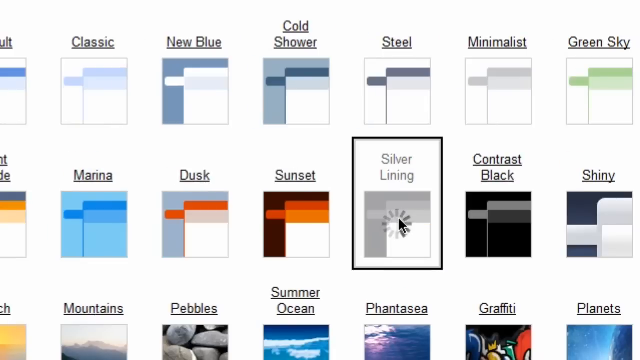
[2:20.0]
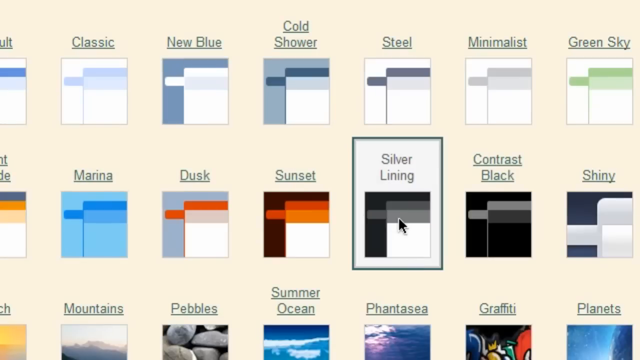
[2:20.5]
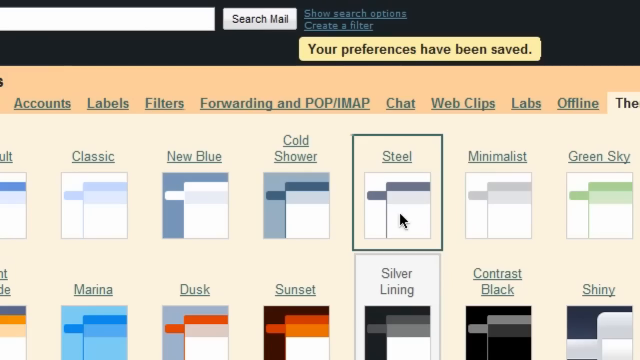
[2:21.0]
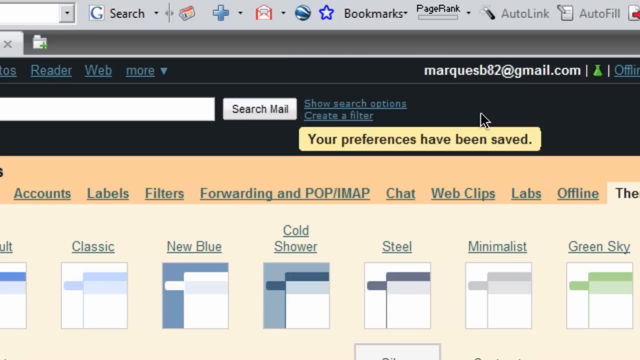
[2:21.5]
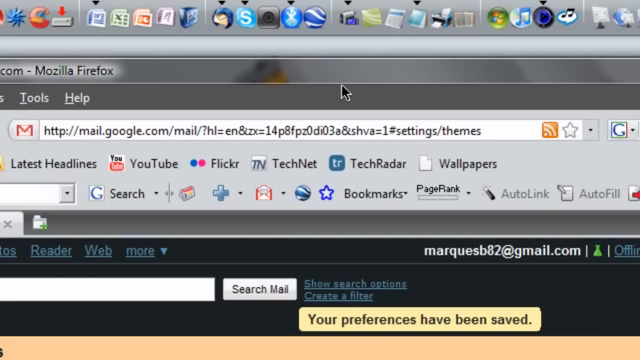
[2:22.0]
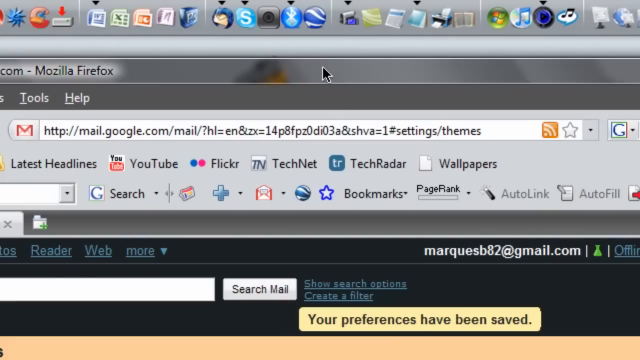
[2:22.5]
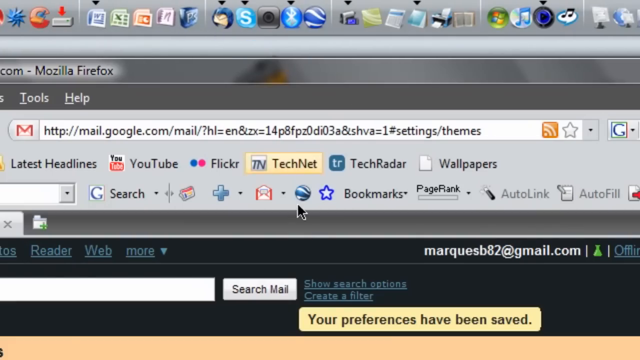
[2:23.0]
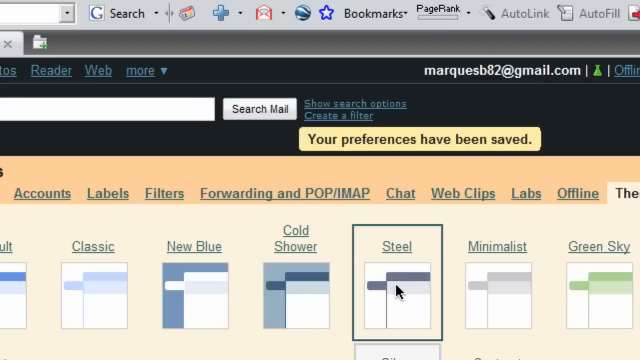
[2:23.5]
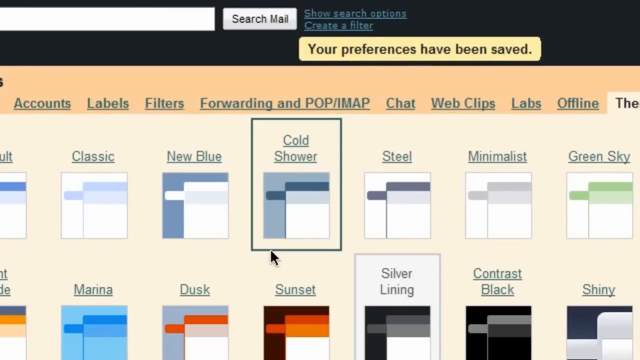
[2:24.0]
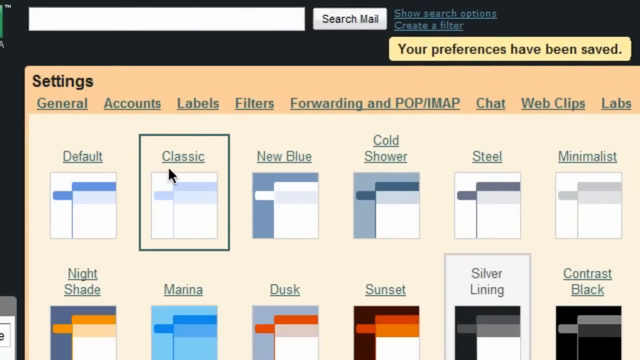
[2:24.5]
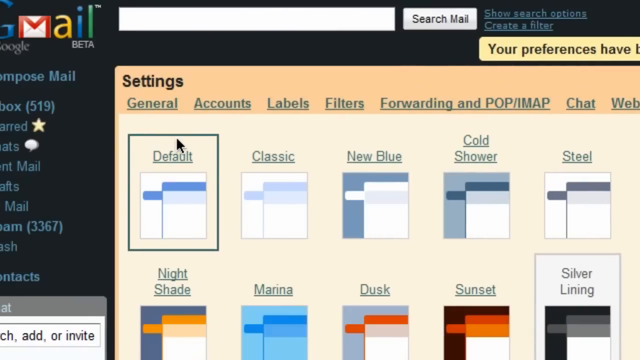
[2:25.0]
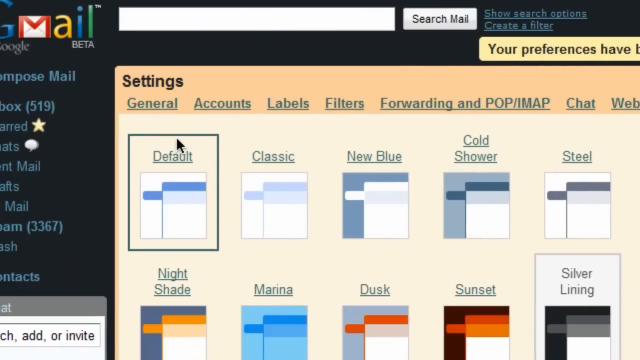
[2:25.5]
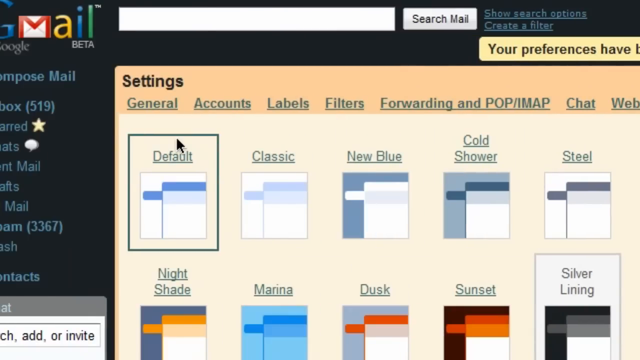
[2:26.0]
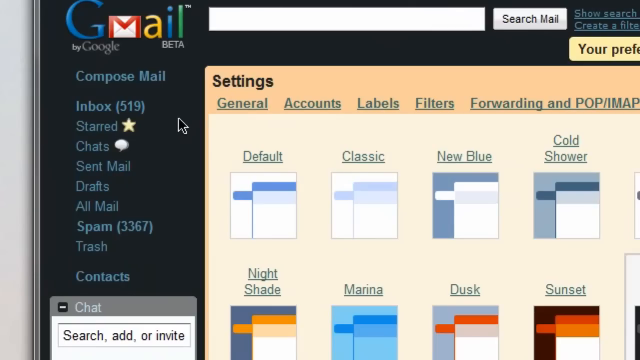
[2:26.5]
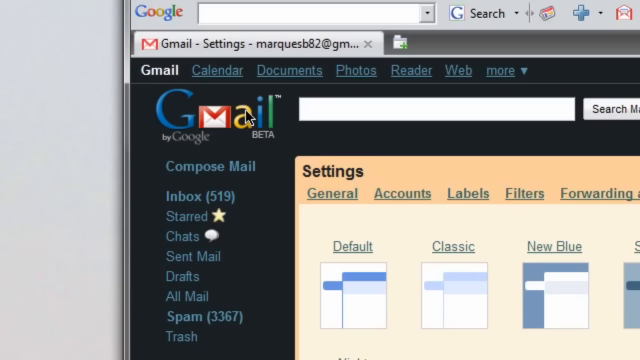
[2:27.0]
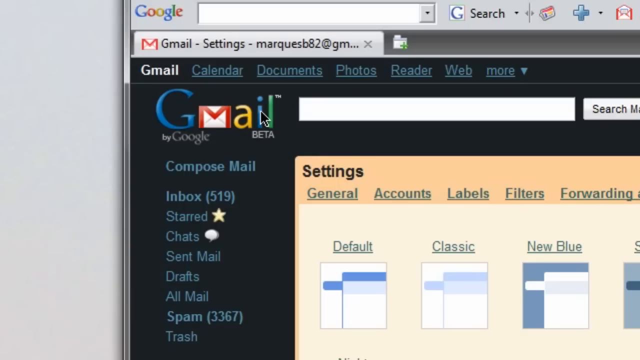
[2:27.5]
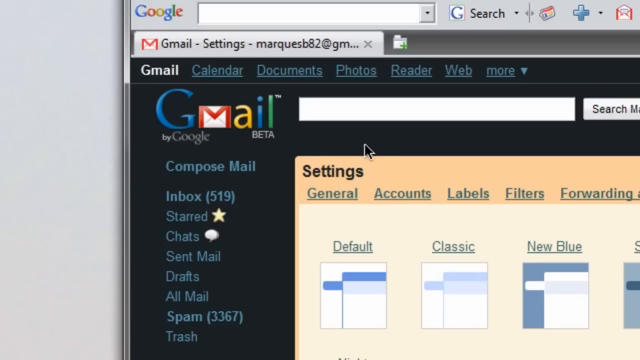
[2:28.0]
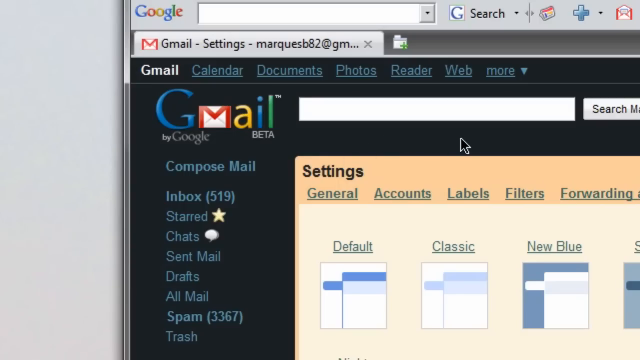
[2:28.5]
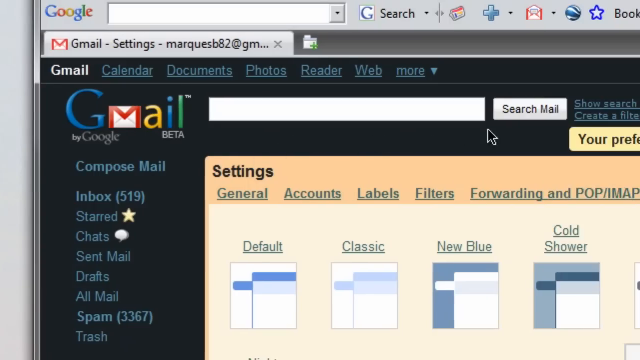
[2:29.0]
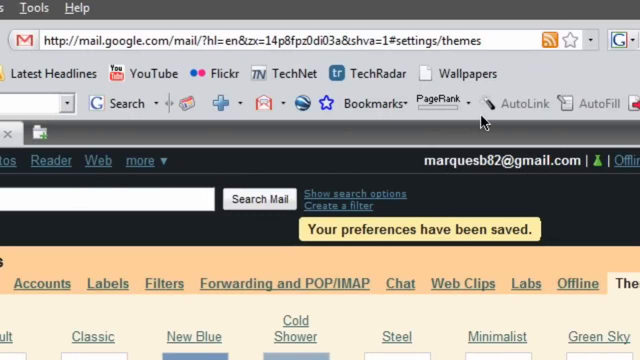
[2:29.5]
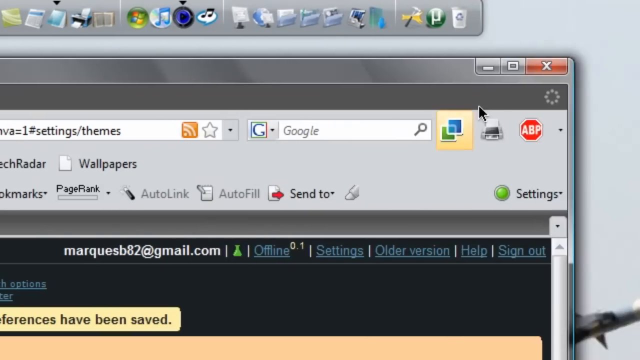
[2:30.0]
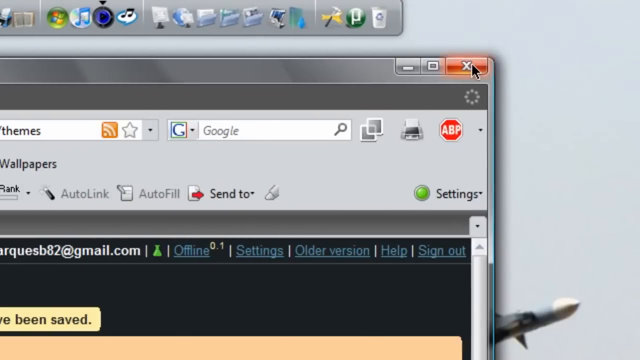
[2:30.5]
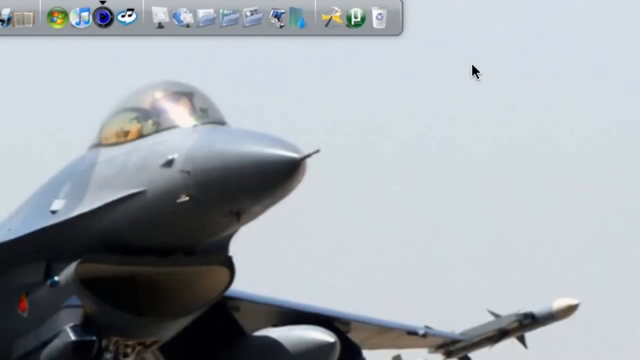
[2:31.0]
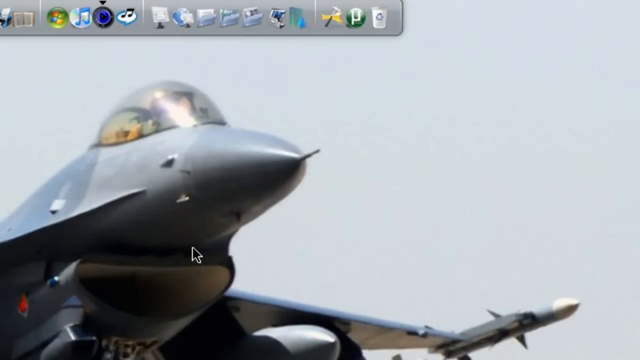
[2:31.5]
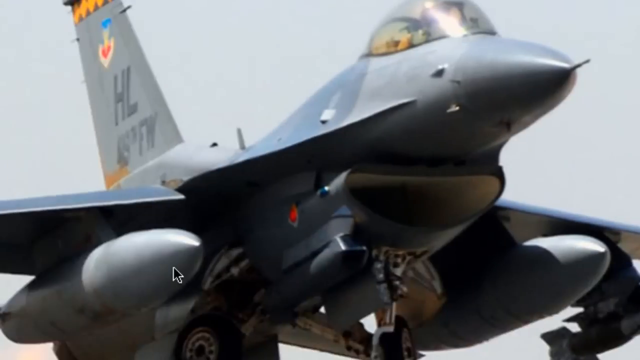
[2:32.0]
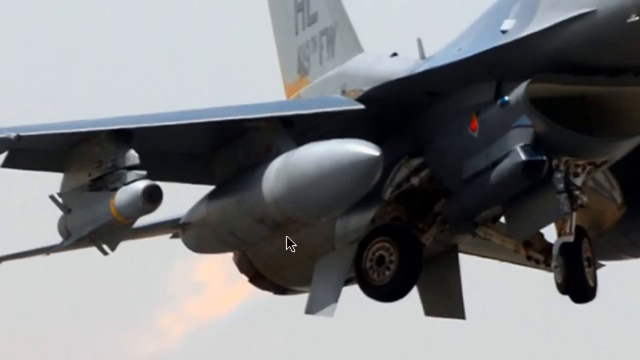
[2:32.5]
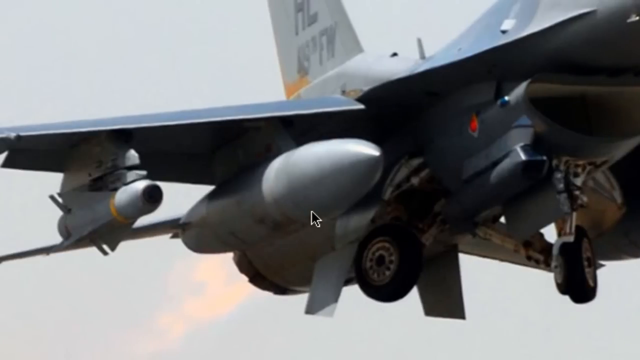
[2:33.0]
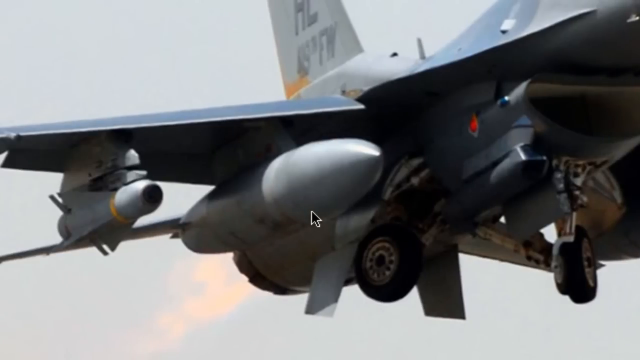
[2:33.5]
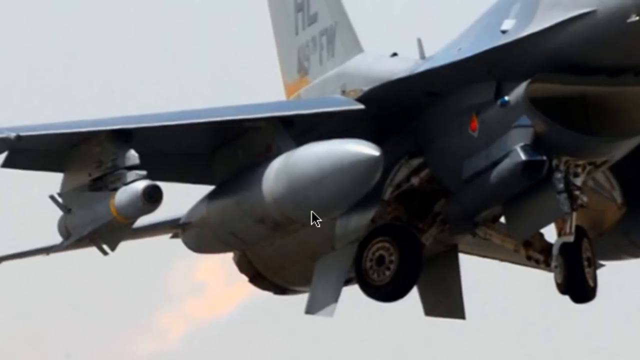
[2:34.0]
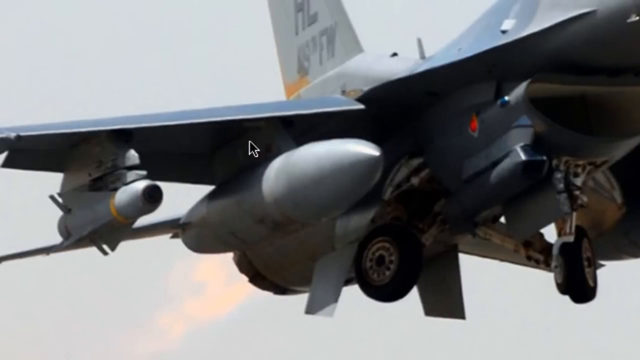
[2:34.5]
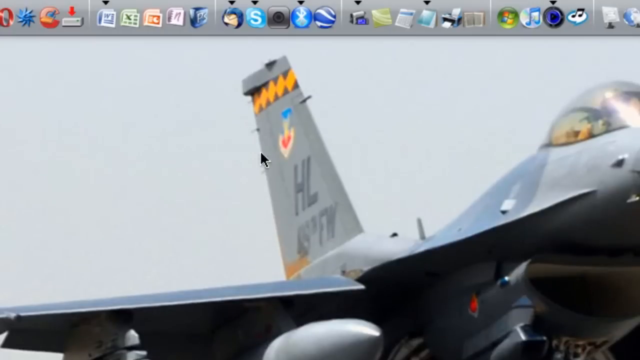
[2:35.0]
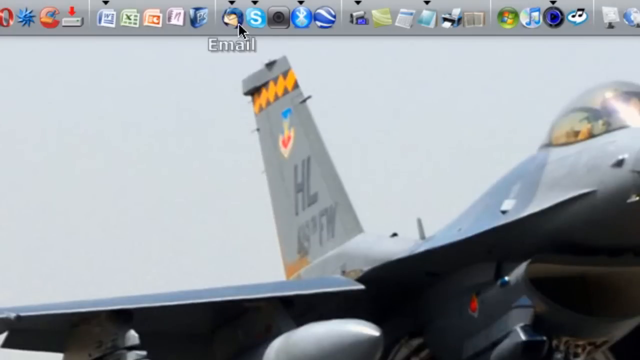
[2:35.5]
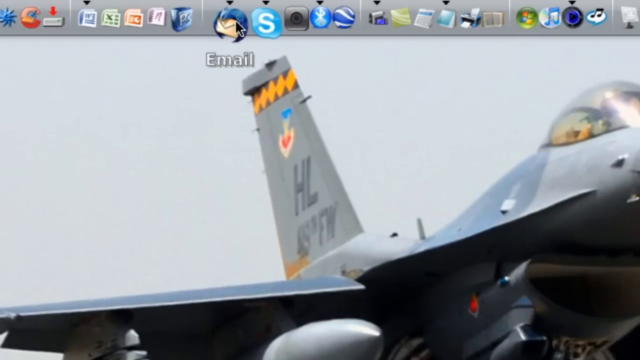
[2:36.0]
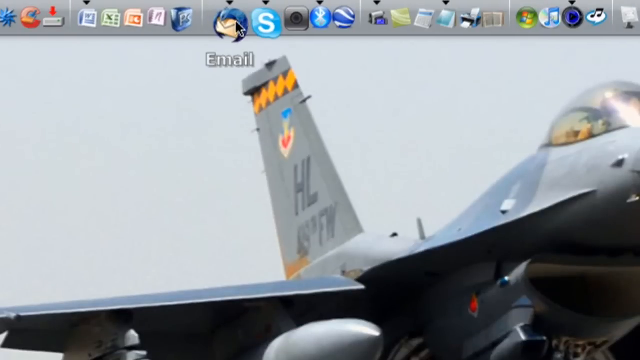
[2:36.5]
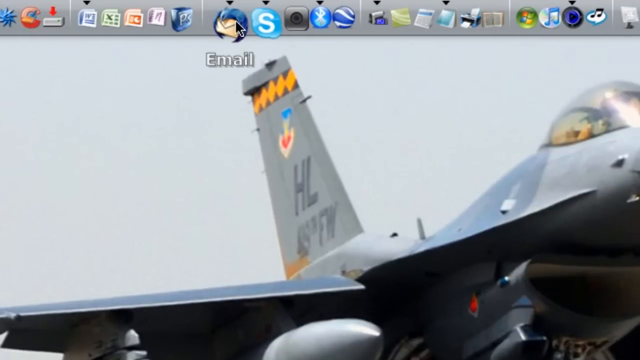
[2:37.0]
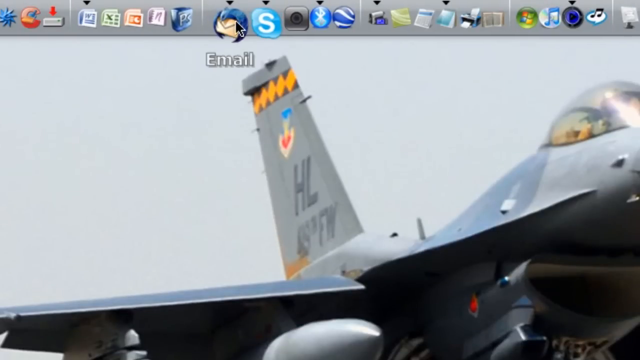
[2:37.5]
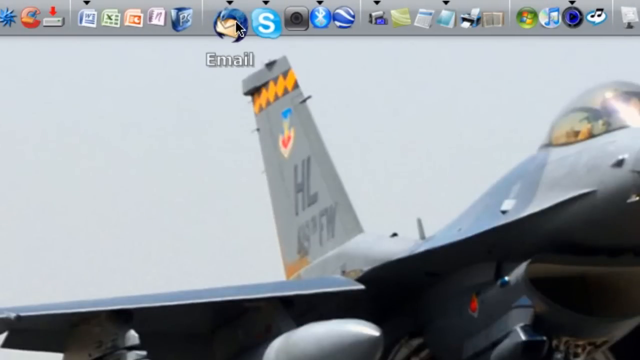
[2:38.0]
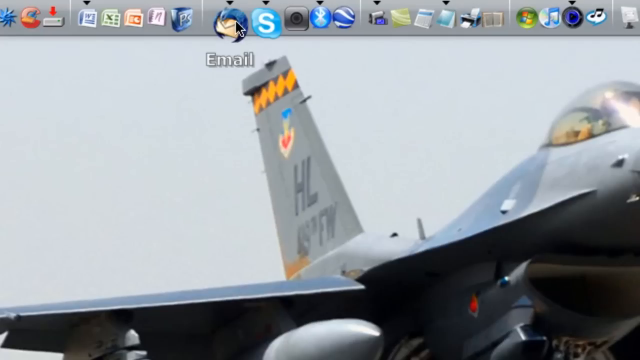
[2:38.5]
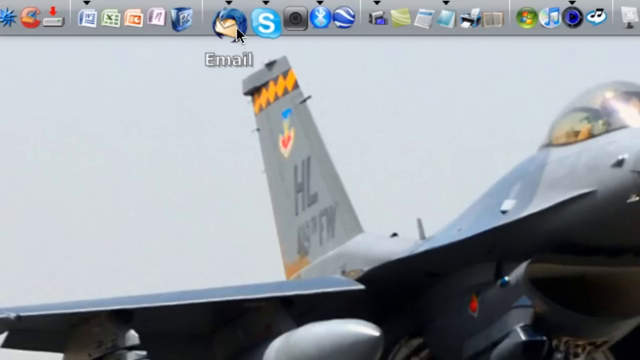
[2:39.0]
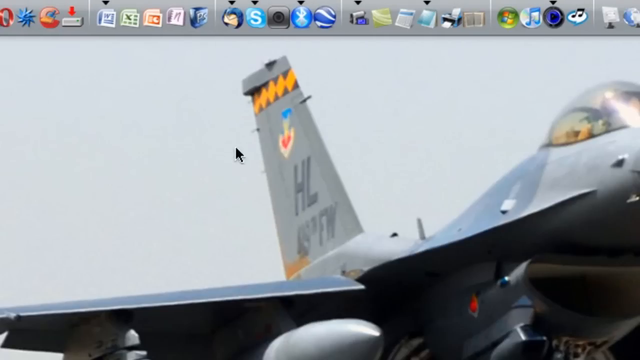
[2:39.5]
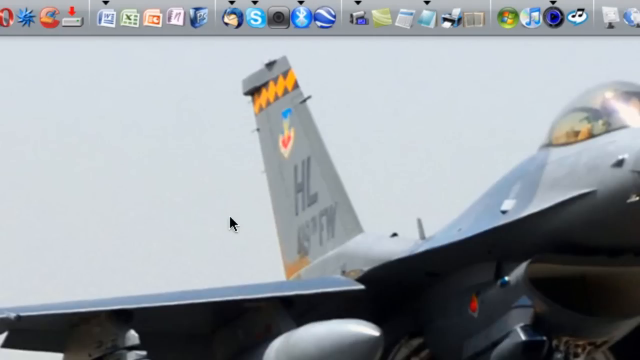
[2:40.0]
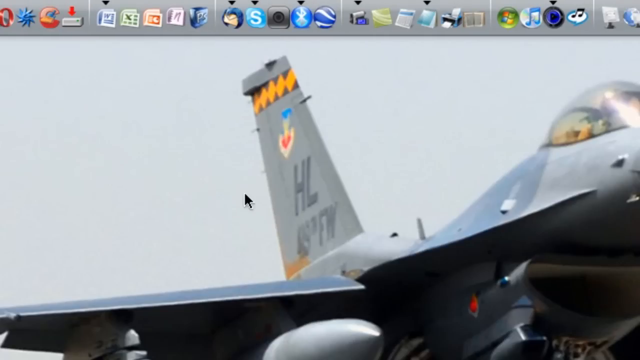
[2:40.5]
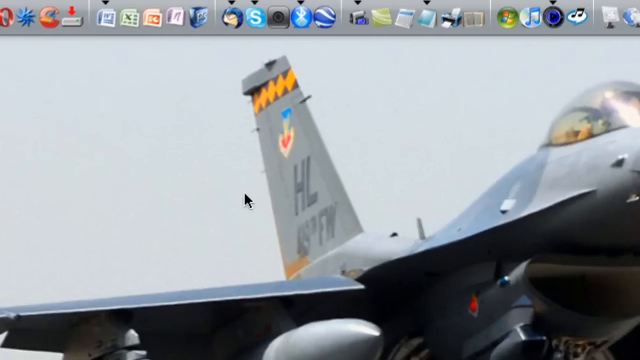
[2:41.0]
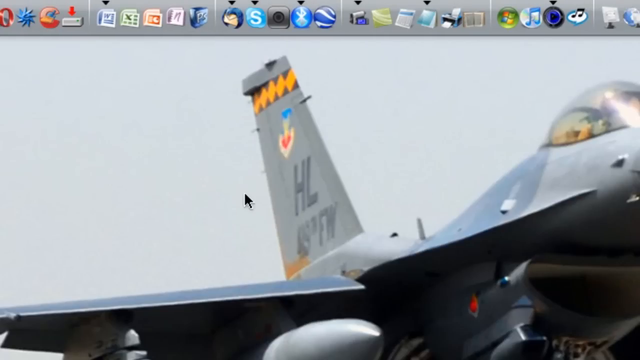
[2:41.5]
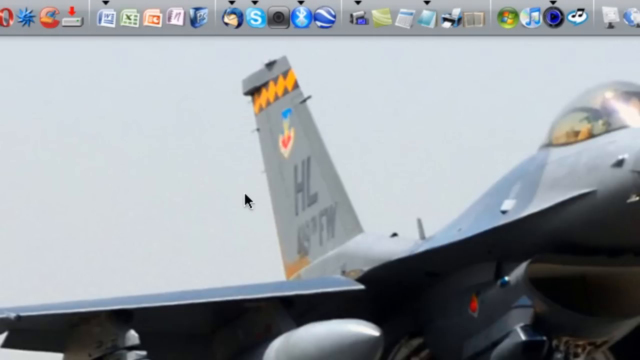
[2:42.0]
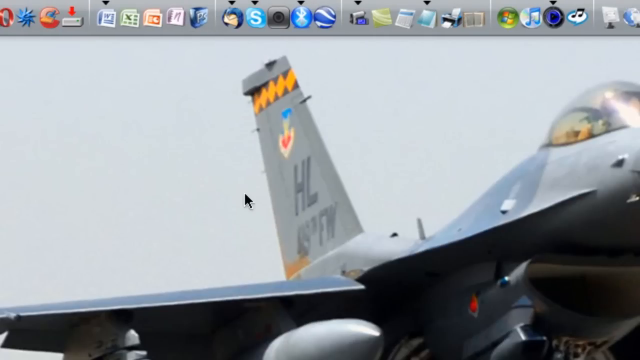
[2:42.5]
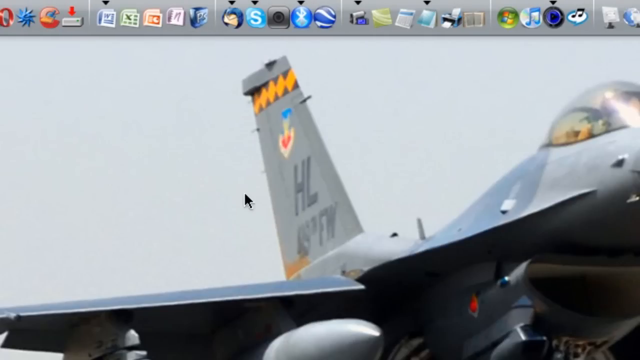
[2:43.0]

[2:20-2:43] It is uncertain whether silver lining was clicked, as the colours do not appear fully grey. The menu is closed and the image of the plane returns, apparently a background image. The plane seems quite old-fashioned, possibly a war plane, and is not a commercial airliner. It is photographed from underneath, so the wheels and underside are clearly visible. The pilot is sitting in a little domed, windowed section at the top of the plane. Something faint and orange is behind the plane, possibly a flame or just heat, contrasting with the grey sky. The rest of the plane is also grey.